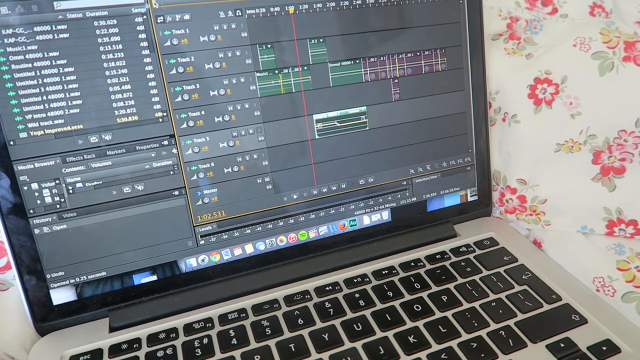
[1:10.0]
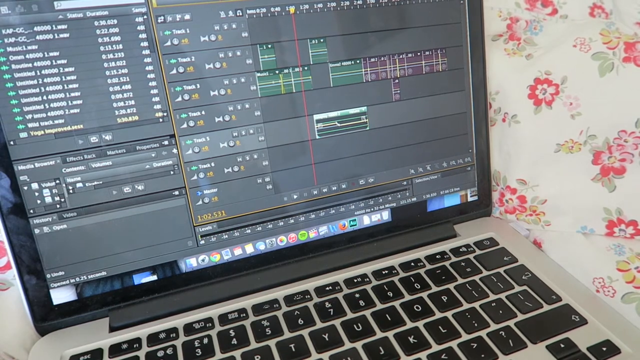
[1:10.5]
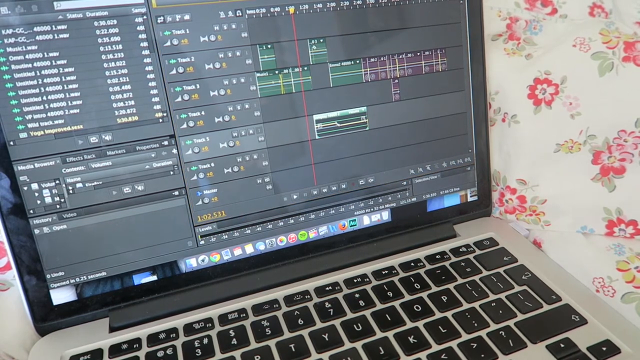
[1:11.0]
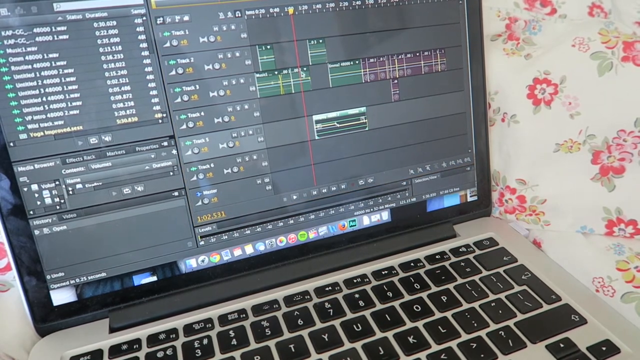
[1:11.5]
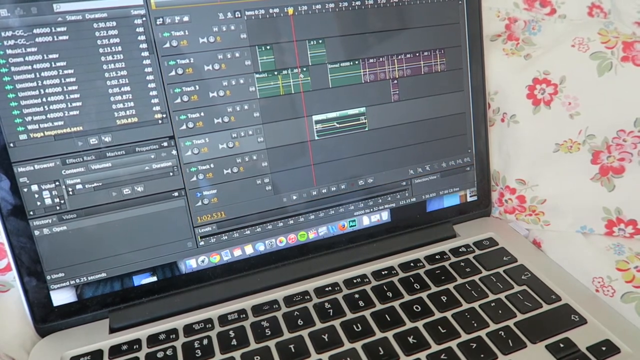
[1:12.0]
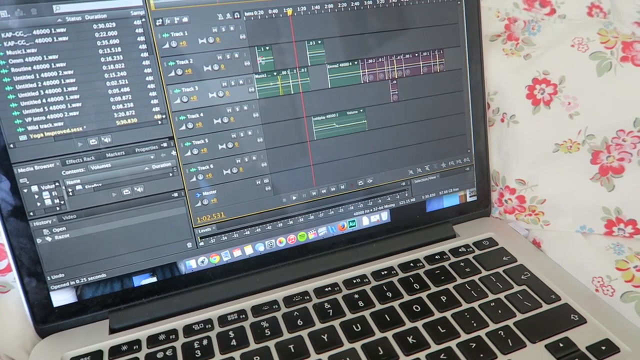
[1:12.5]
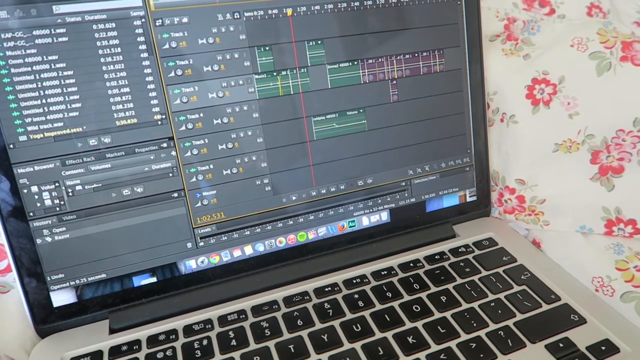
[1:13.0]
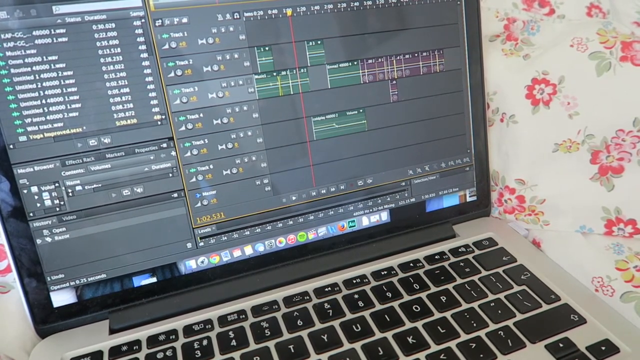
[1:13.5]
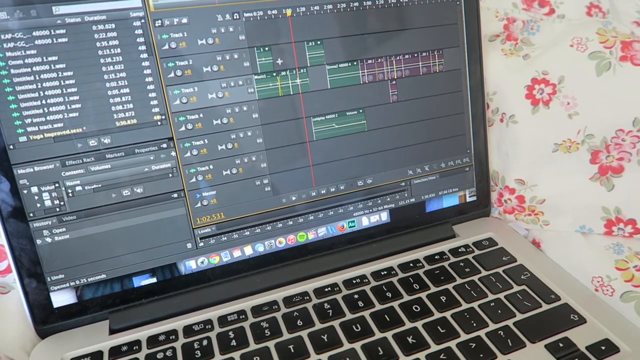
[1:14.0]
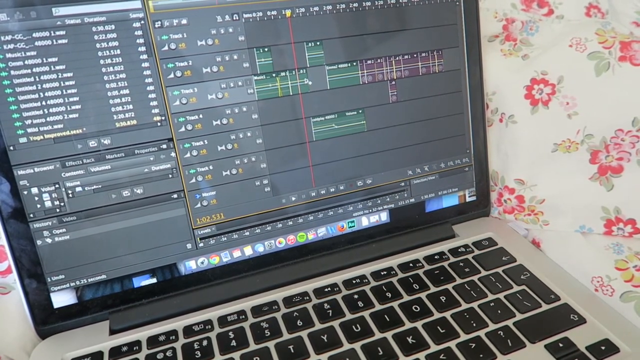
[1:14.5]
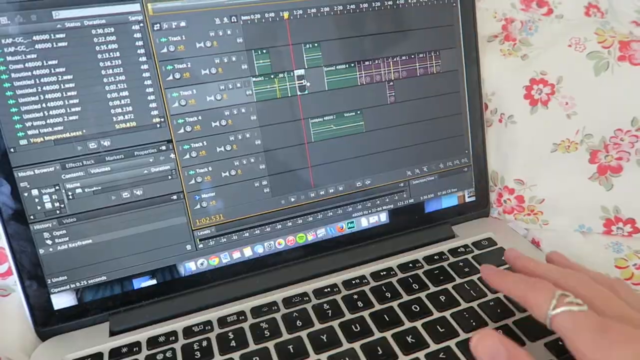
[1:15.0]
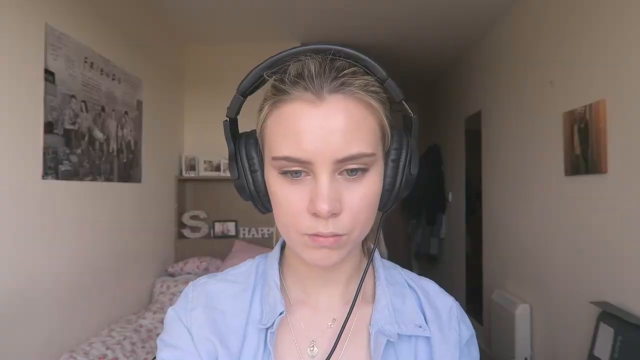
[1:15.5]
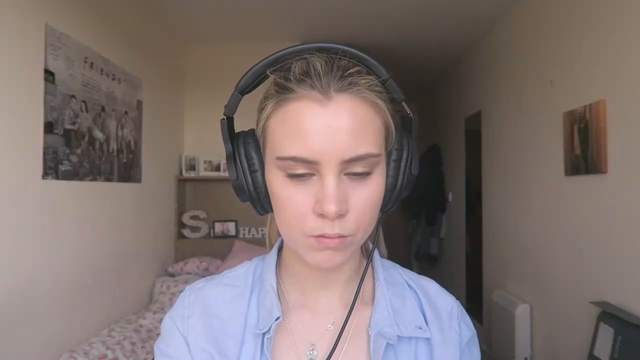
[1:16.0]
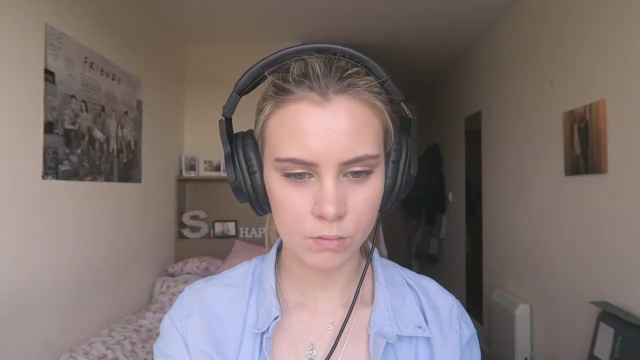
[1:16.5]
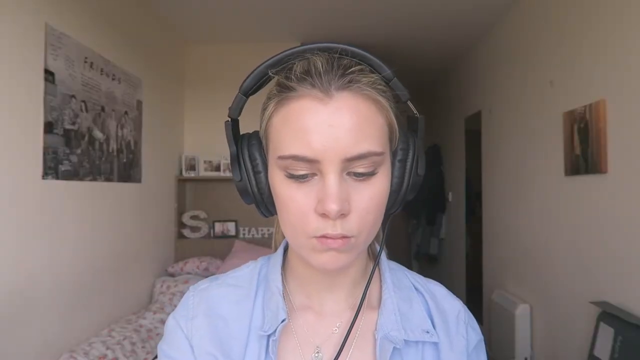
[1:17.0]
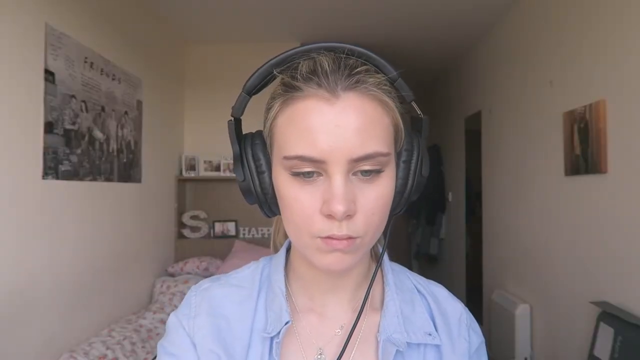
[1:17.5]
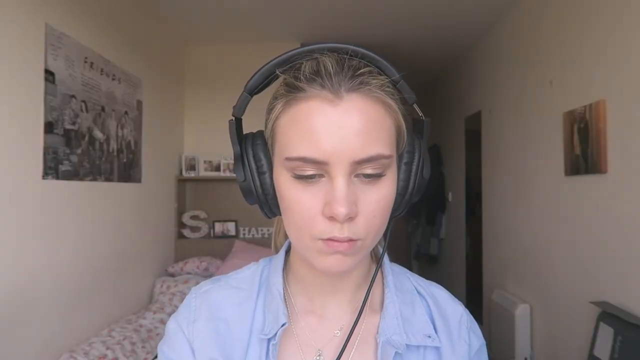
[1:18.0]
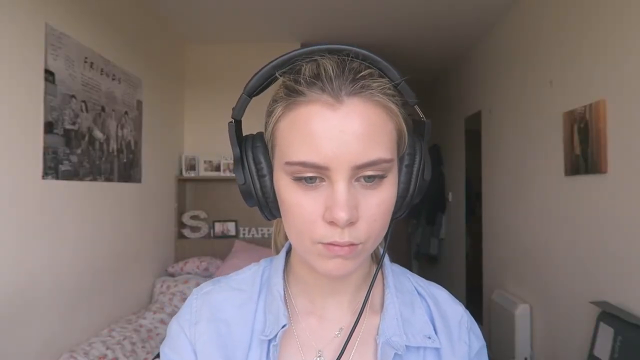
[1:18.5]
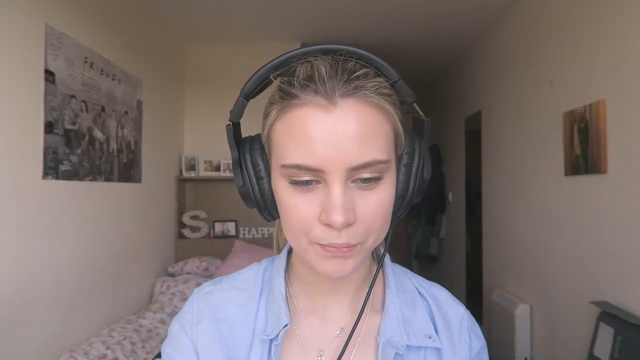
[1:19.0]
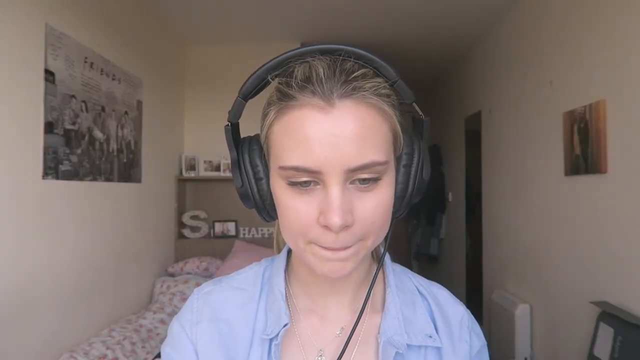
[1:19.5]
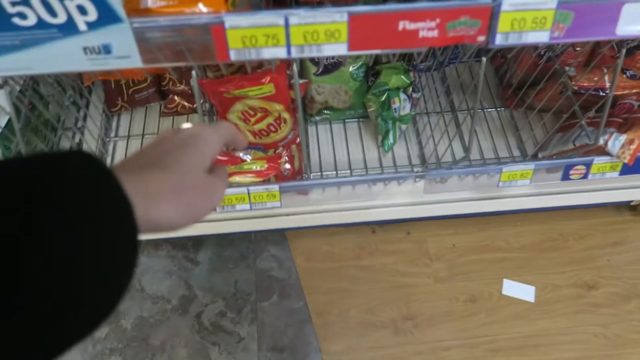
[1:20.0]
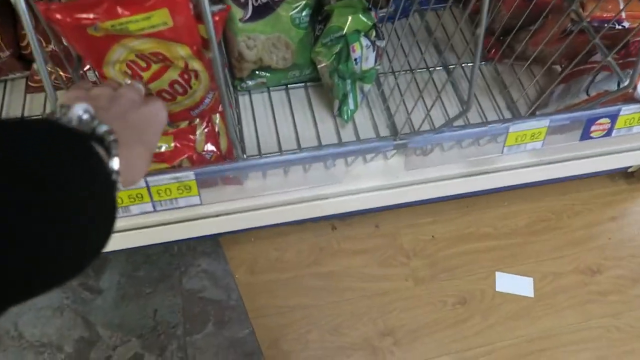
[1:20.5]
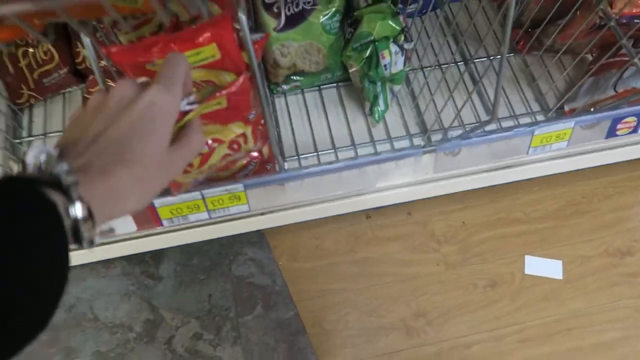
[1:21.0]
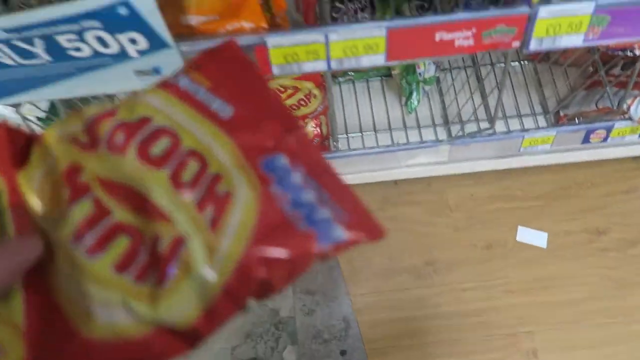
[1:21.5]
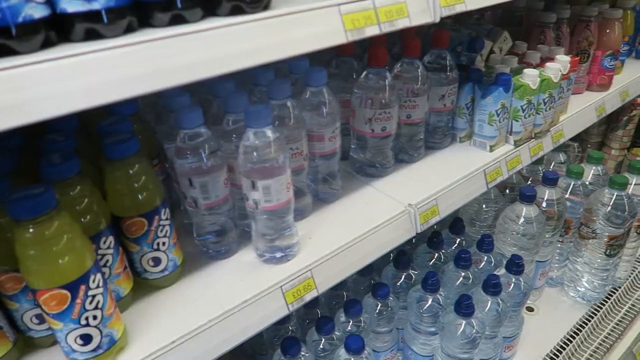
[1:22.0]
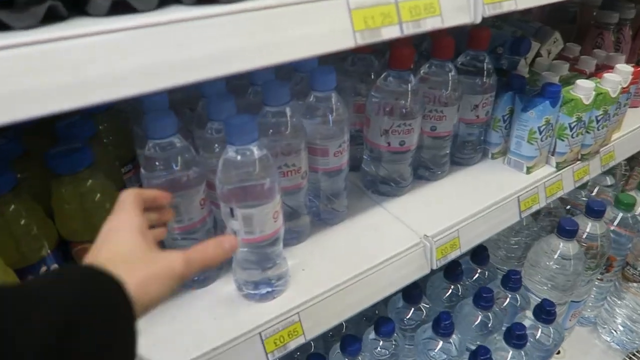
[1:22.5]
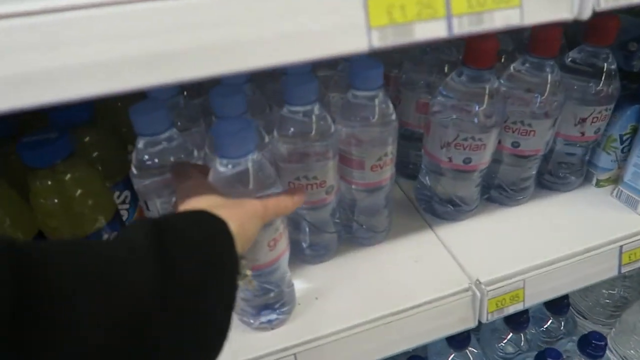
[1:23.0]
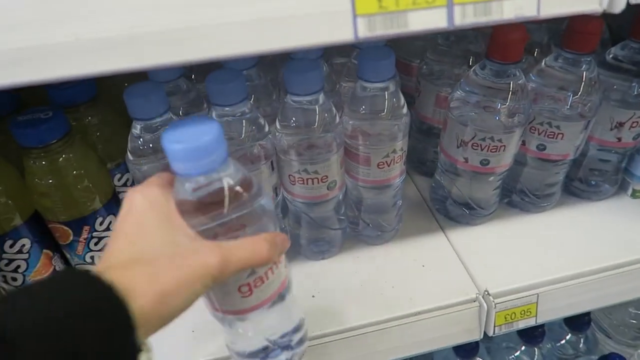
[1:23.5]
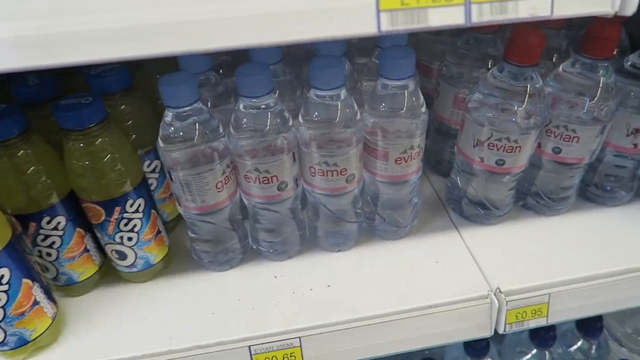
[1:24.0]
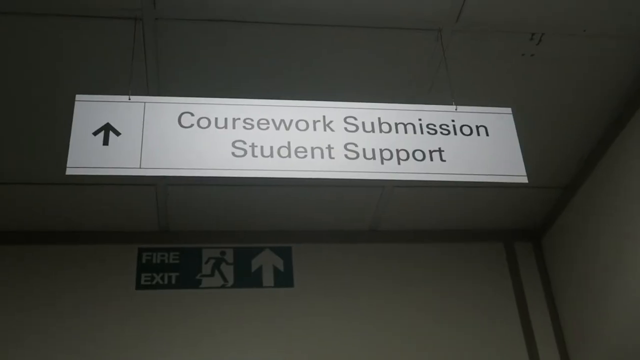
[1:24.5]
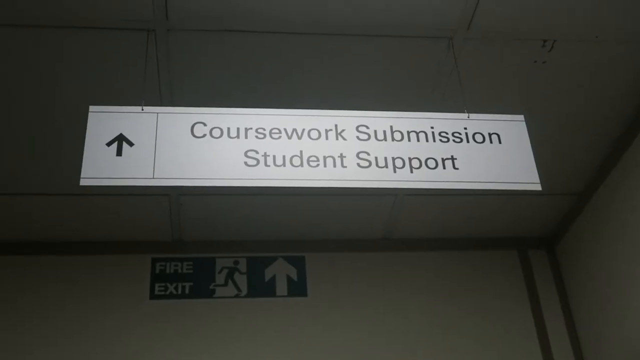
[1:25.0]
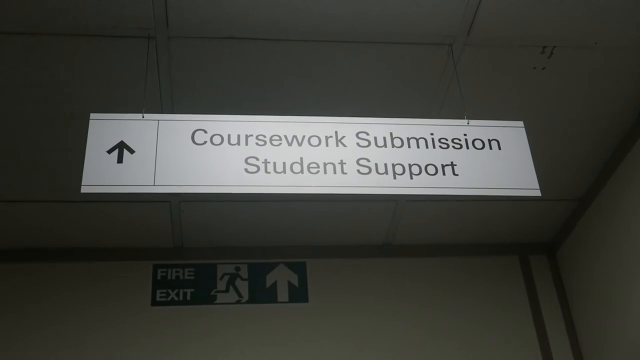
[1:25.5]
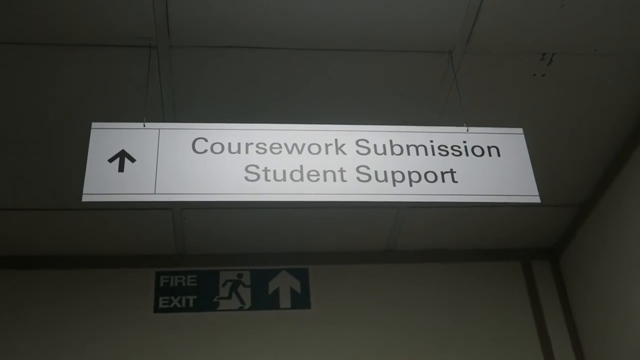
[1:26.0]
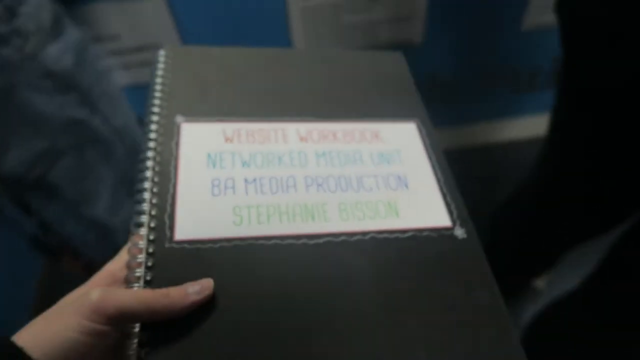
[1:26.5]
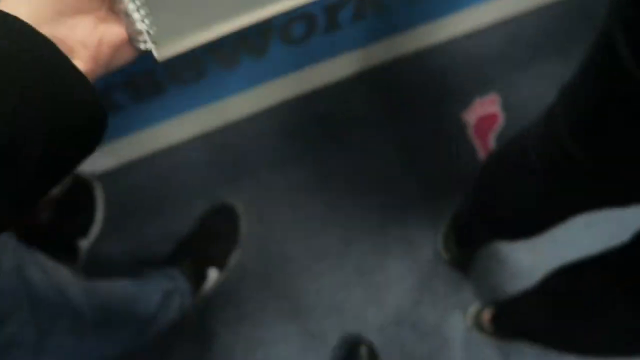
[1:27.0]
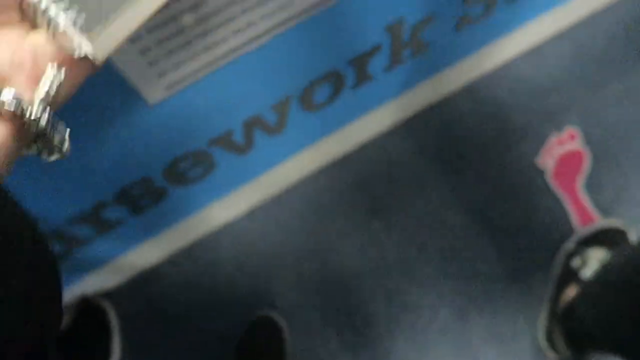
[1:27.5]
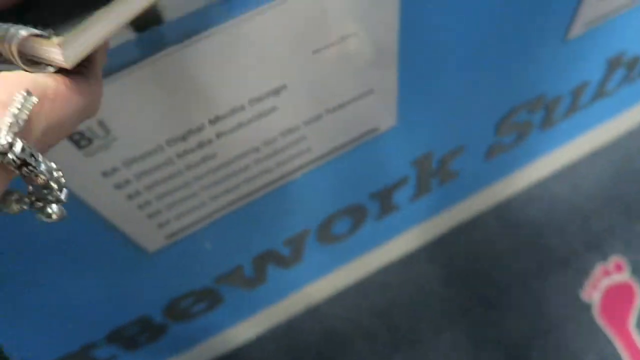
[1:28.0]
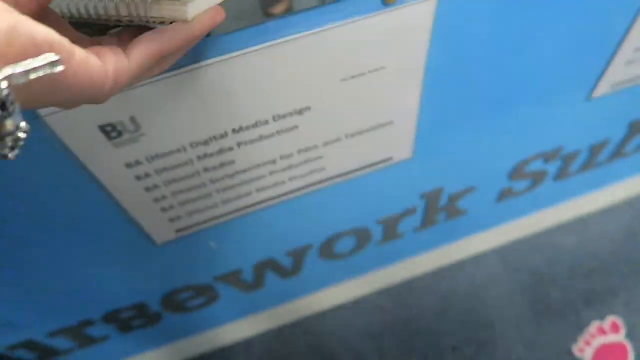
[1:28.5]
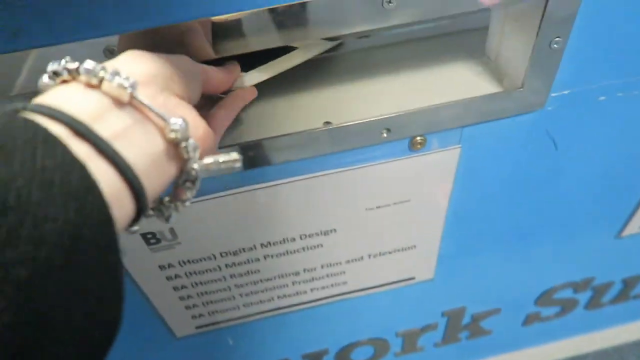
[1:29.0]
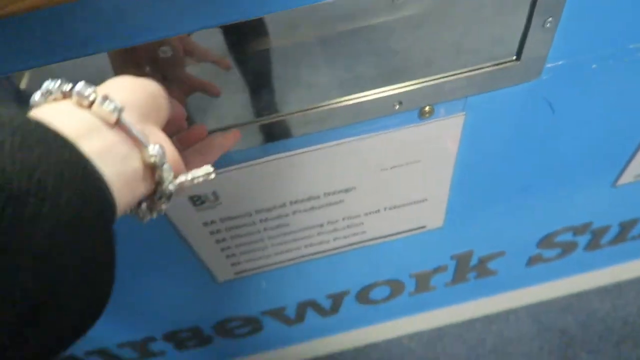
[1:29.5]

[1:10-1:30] The computer shows the black background, with the cursor moving a little. The woman then appears wearing black headphones, with a wire going to the laptop and her hair now pulled back; she is apparently working on some kind of video or audio production software. She is in the same room as before, but the view is from a little further back, so a couple of things on the wall are visible: what looks like a poster on the left and a picture on the right. On the wood cabinet or shelf in the background there now appear to be a few little framed photographs and a large S on its lower left part. She wears a light blue button-down shirt and looks down at her computer. The view then switches to a grocery store, where her hand picks up a small bag of chips or cookies or something from a bottom shelf, and then grabs an Evian water off a shelf. Next is a sign reading "coursework submission student support" with an arrow pointing up, apparently over the top of a hallway. She then holds a black binder whose title is hard to make out but ends in "media production," with her name at the bottom and four lines of different colored text on it. She appears to be handing it in, putting it into a homework studies slot.